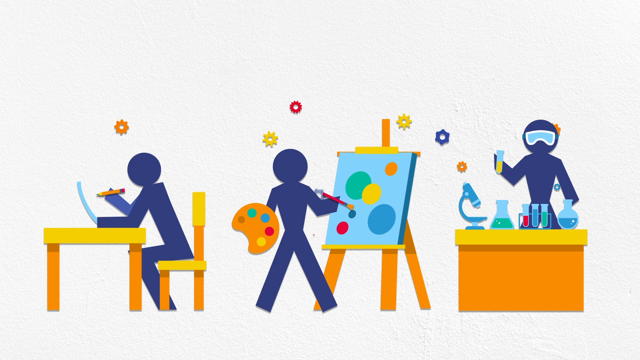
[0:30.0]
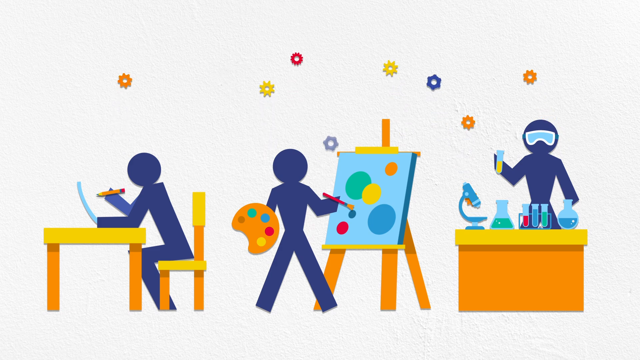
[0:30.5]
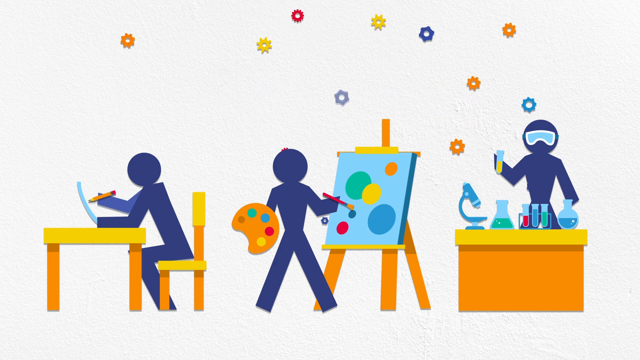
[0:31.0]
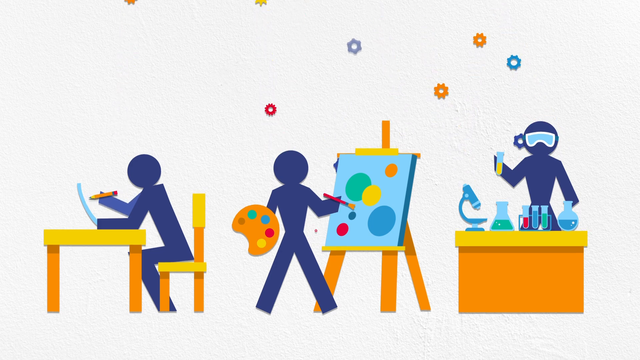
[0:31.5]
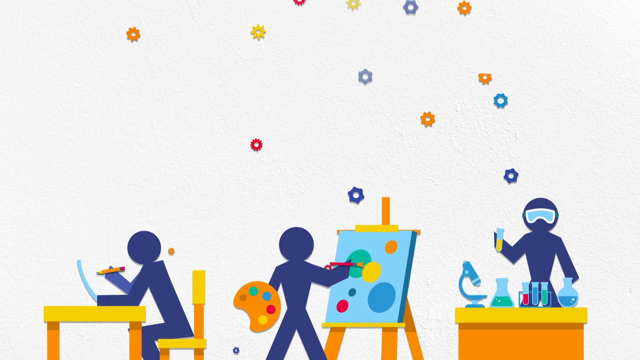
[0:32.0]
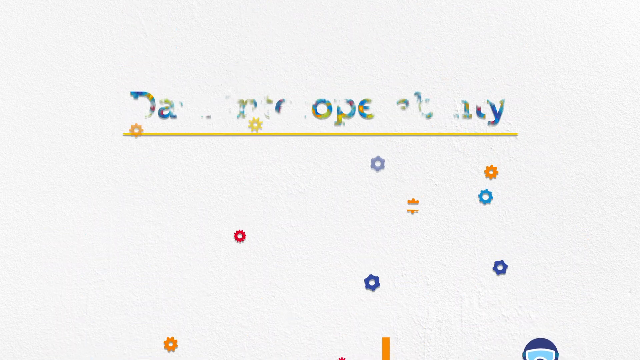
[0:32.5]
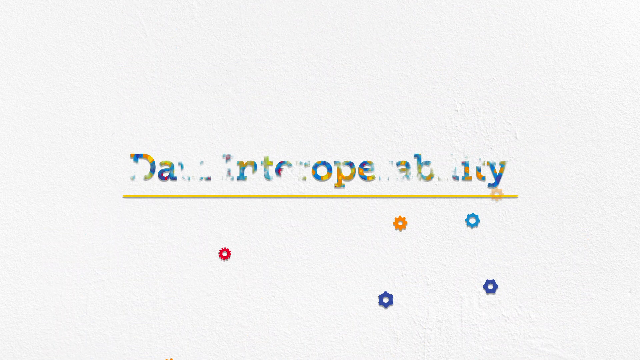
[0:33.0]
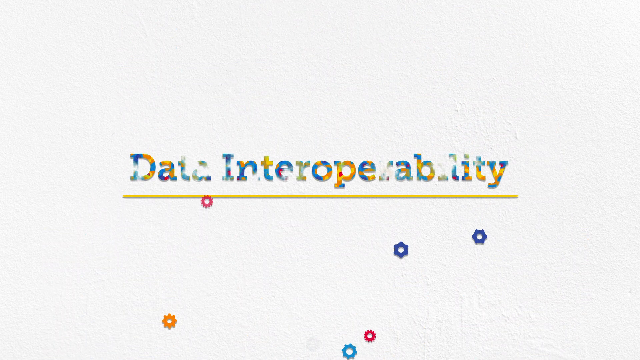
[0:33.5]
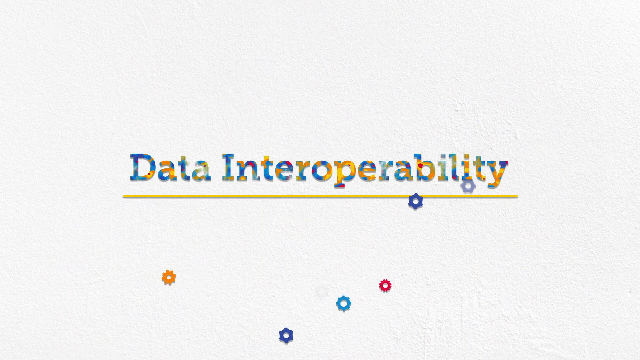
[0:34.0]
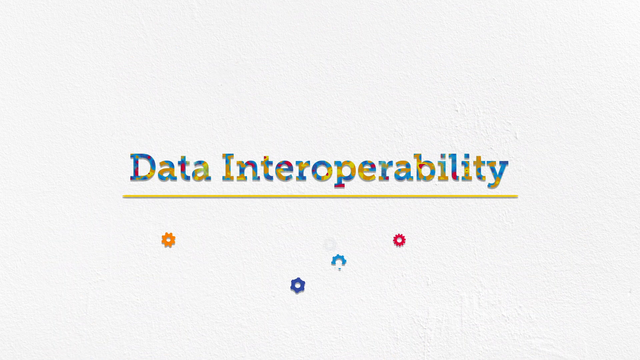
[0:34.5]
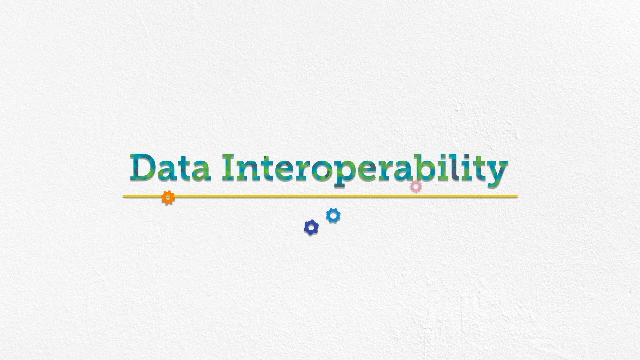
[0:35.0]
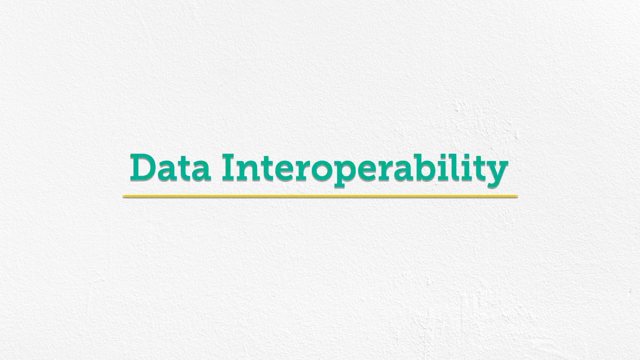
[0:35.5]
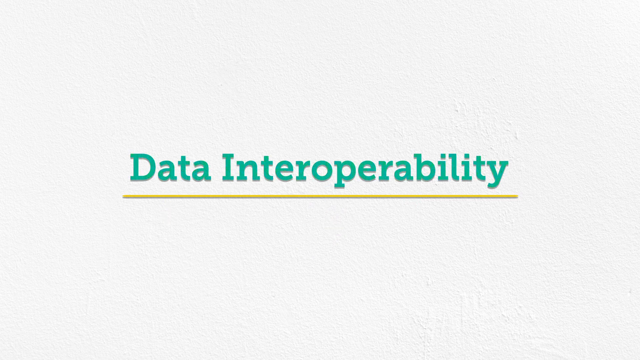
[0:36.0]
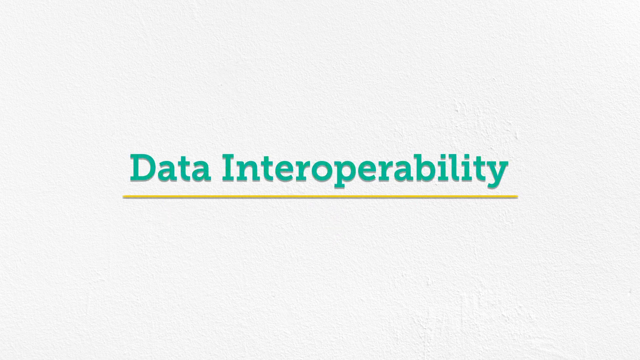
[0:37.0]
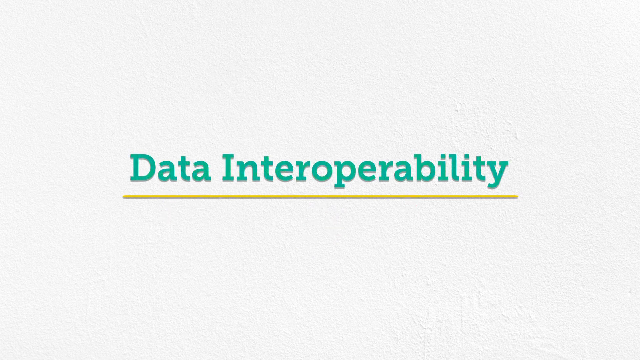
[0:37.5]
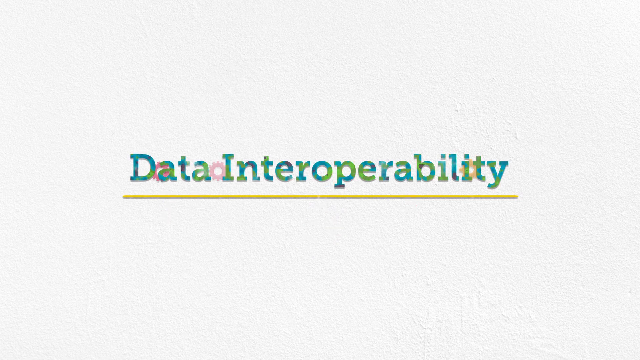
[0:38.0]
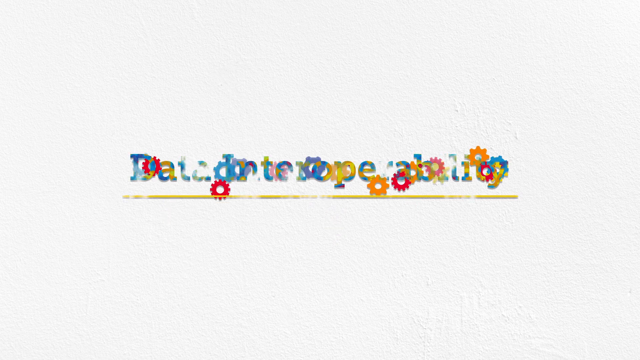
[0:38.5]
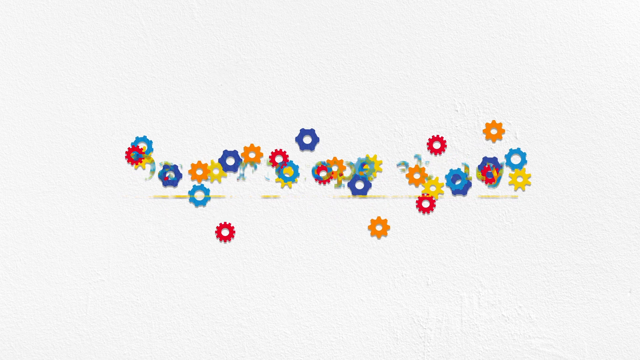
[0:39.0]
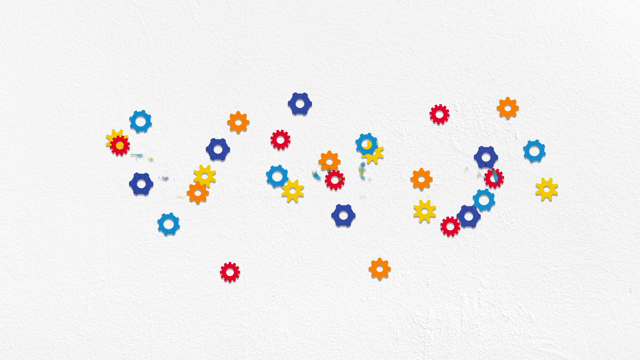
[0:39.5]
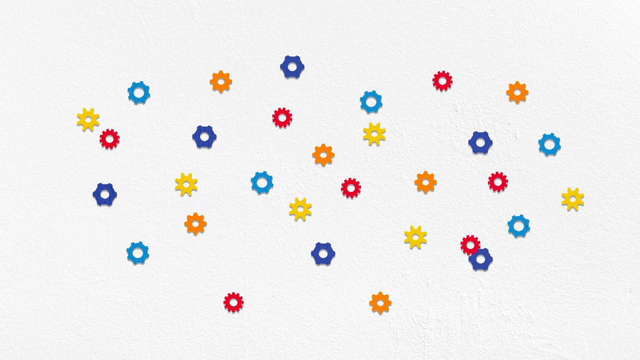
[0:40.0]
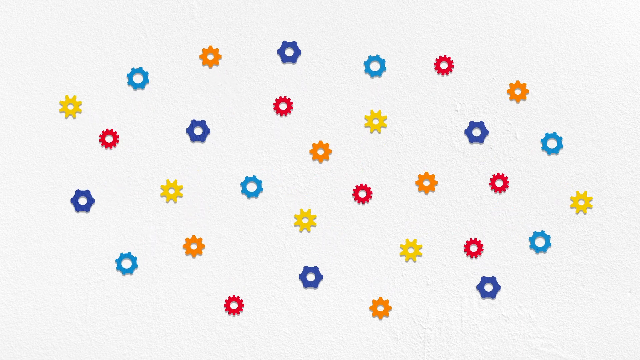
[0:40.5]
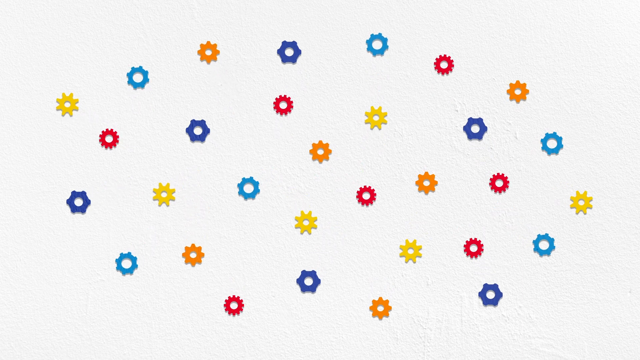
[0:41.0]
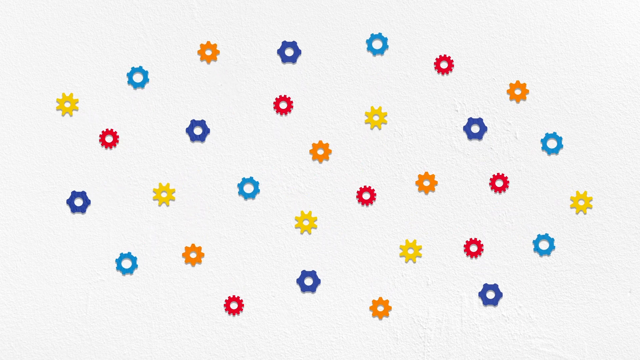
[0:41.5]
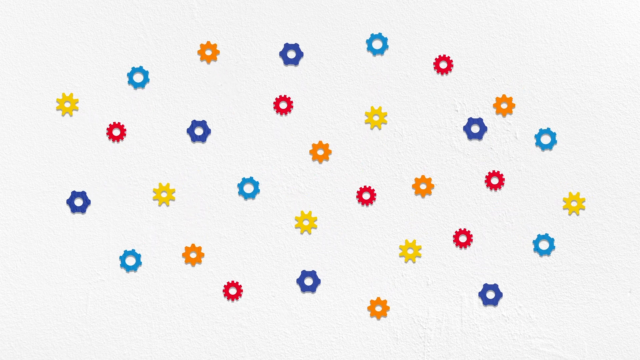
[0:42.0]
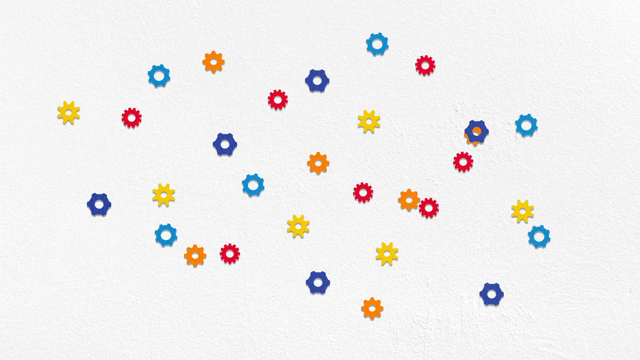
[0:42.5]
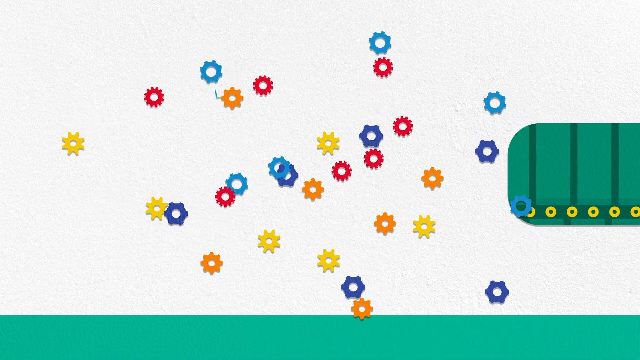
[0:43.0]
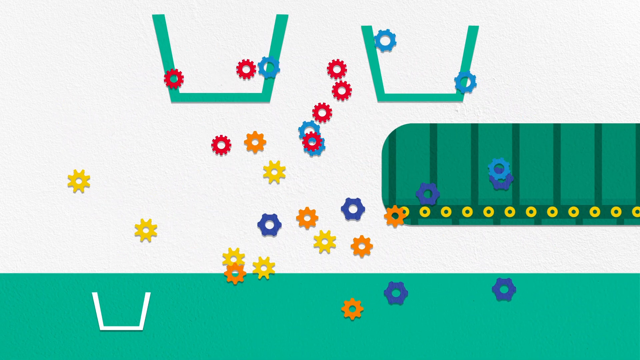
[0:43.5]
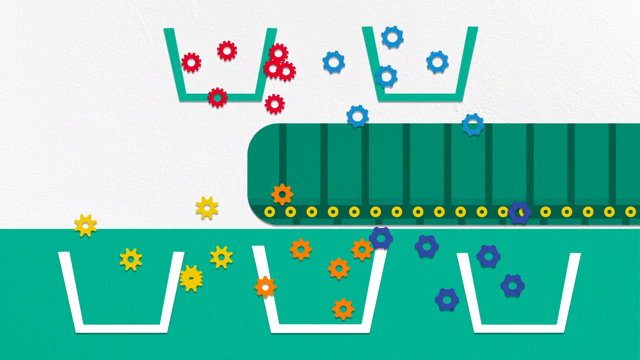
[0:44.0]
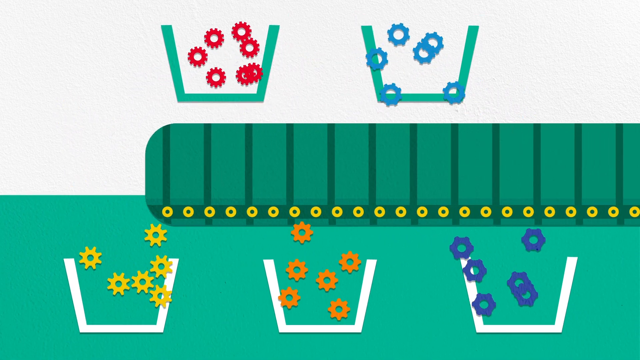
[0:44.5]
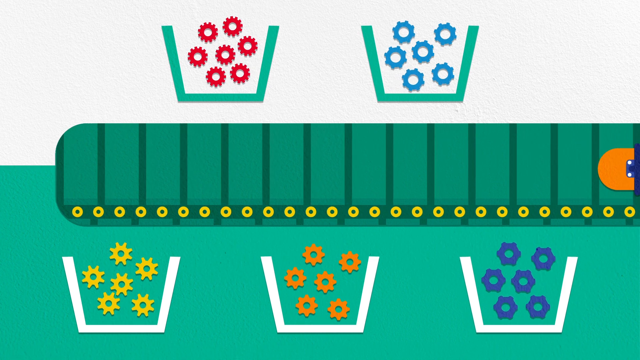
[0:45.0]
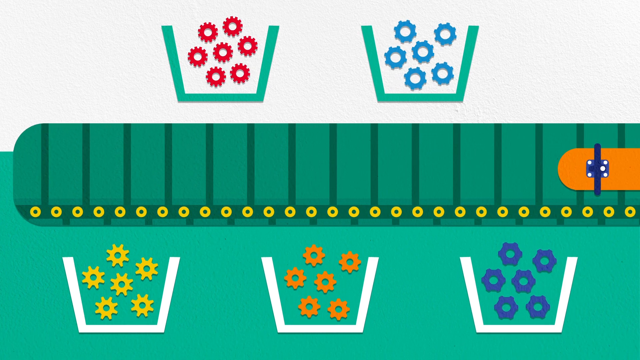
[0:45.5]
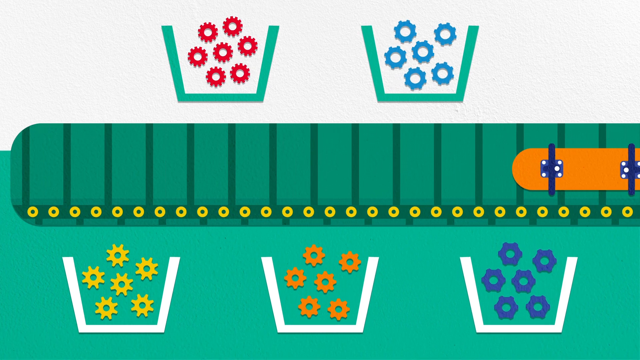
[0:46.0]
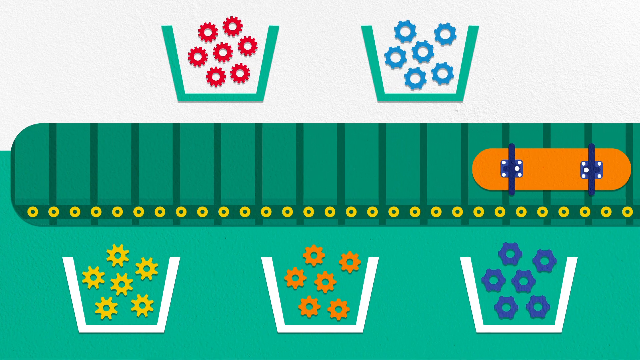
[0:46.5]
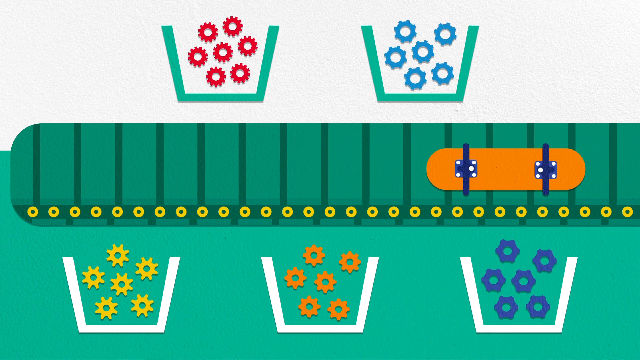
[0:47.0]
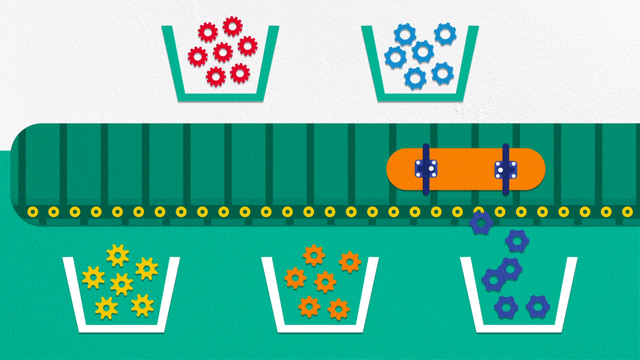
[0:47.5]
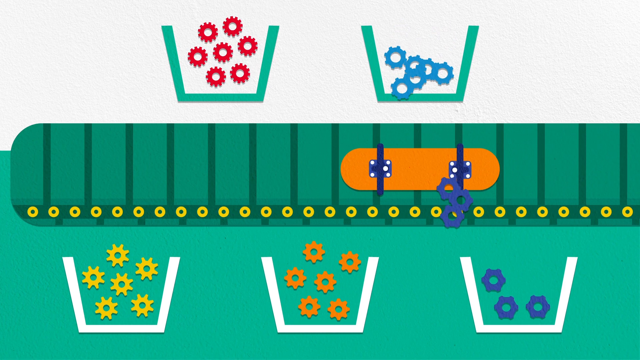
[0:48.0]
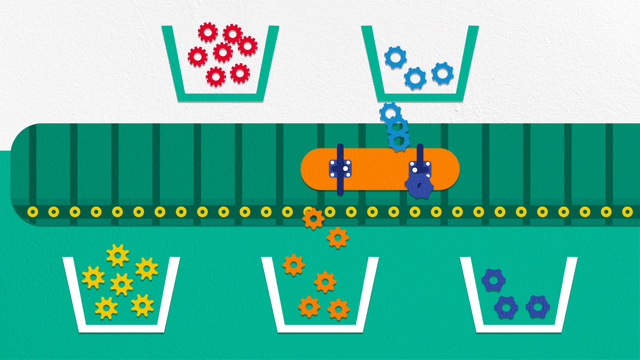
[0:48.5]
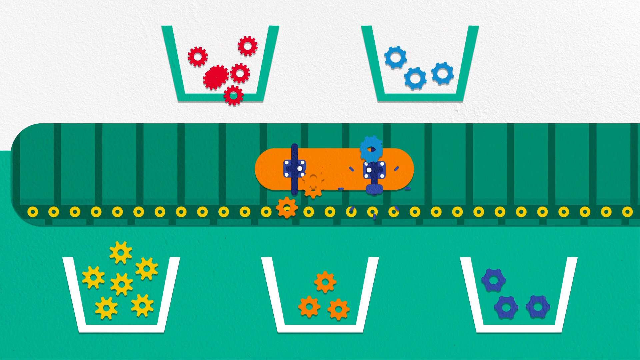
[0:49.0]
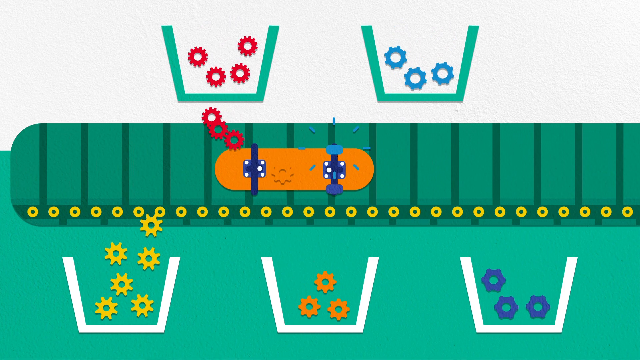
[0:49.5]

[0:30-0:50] The three characters are each busy with a different task until dots in different colors pop up from the top and come down onto them. Text appears reading "data interoperability"; it changes color to green and is underlined by a yellow line. The text then joins together and creates gears of different colors, which play around until they go into containers where they are organized in sequence. An orange skateboard comes through, filled with these colors, in what looks like a kind of factory. The skateboard does not appear to have holes, and it is being pushed through so that it can go and get the gears onto it.